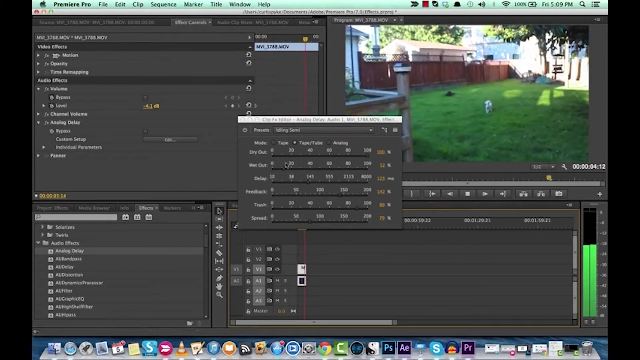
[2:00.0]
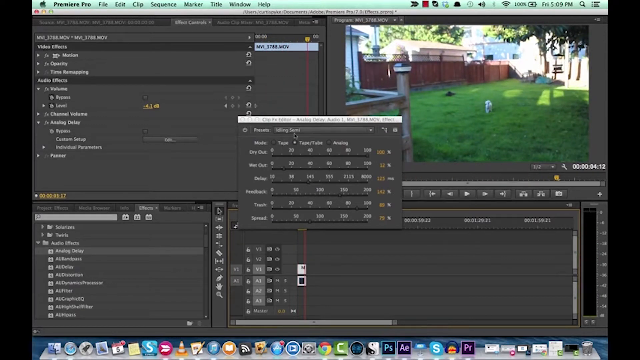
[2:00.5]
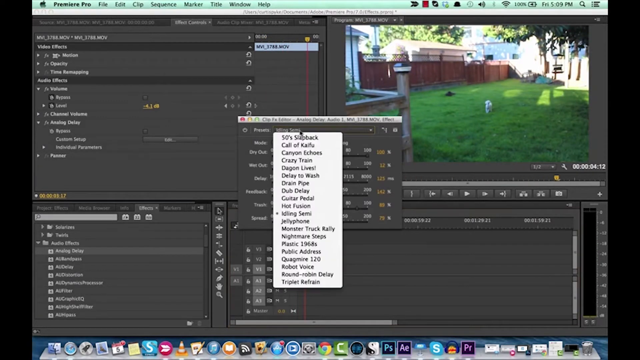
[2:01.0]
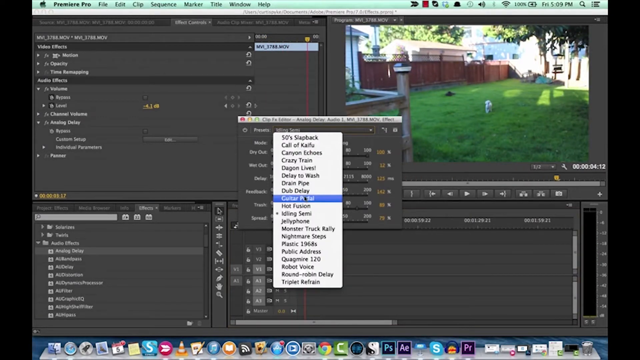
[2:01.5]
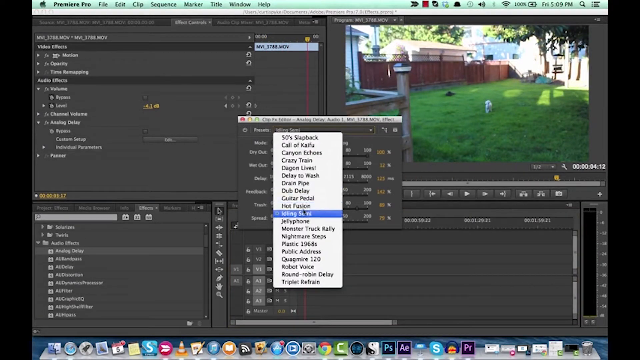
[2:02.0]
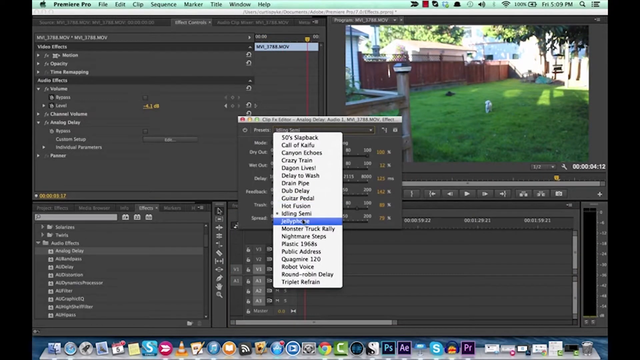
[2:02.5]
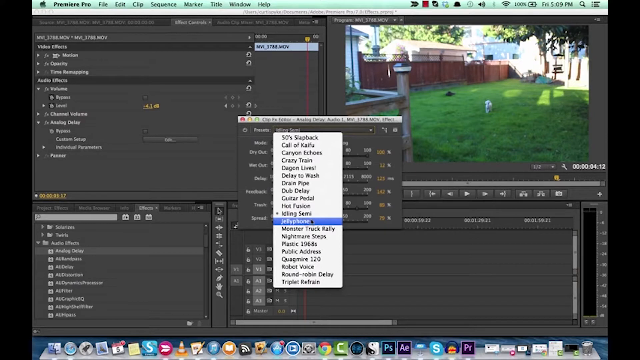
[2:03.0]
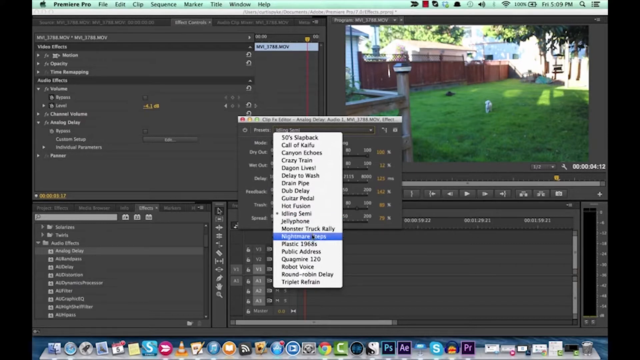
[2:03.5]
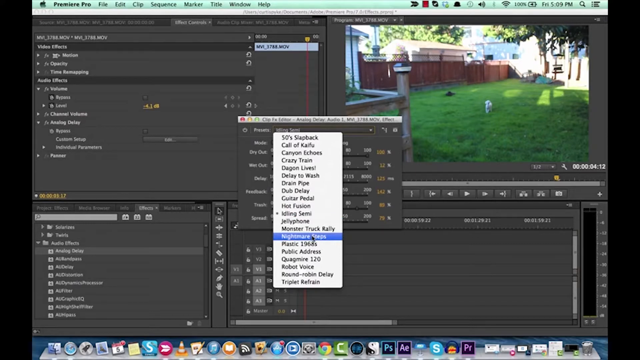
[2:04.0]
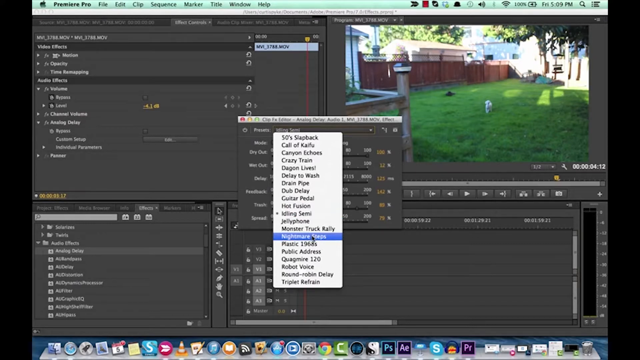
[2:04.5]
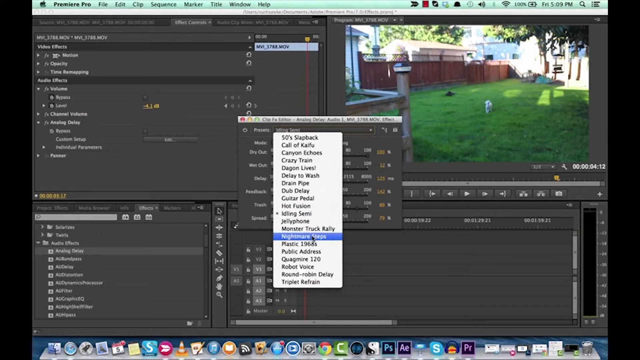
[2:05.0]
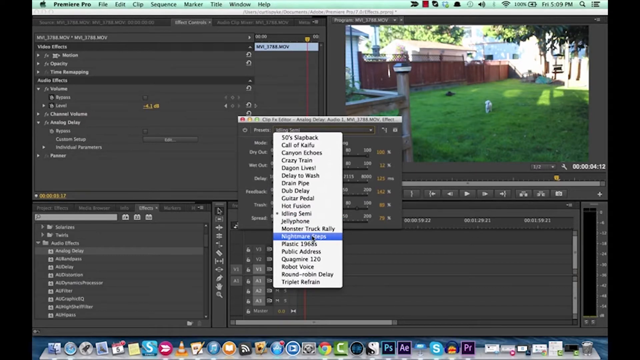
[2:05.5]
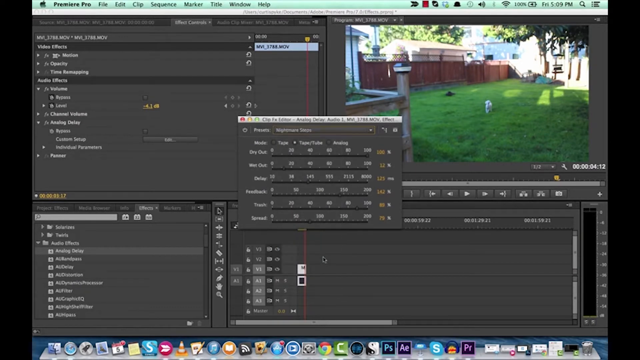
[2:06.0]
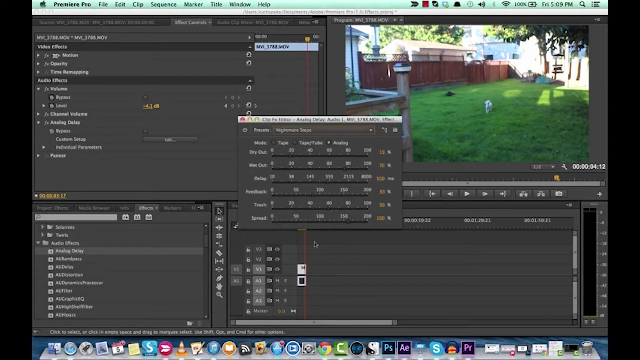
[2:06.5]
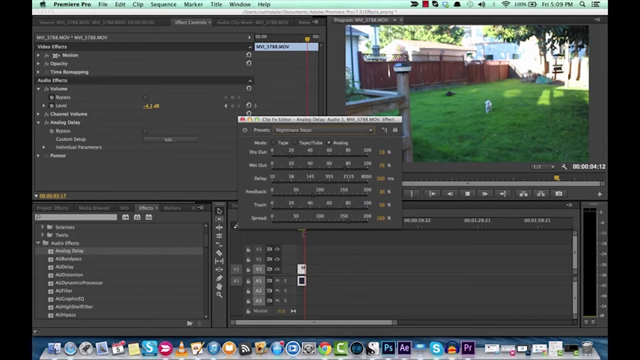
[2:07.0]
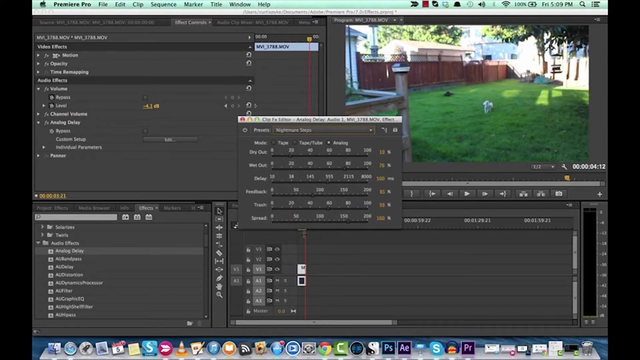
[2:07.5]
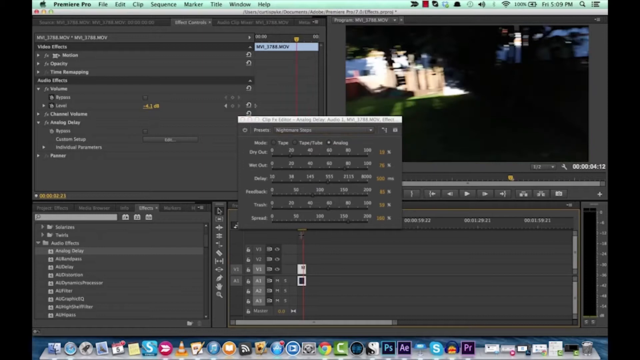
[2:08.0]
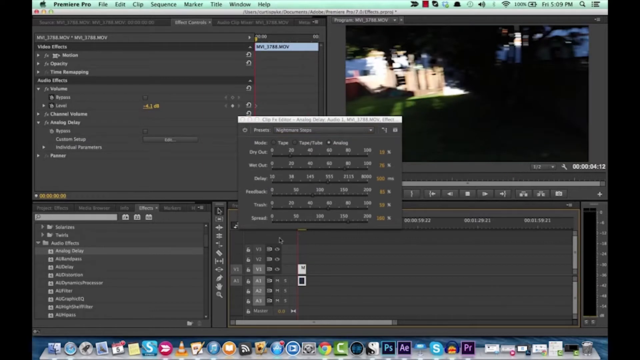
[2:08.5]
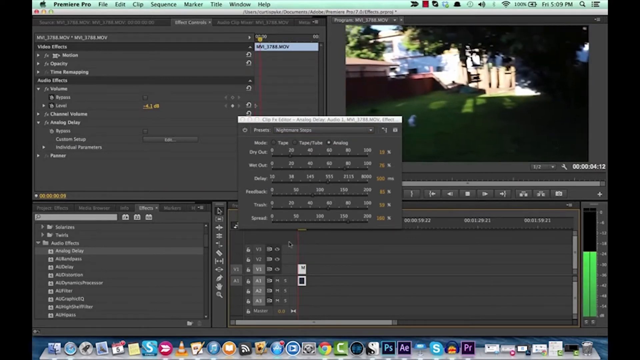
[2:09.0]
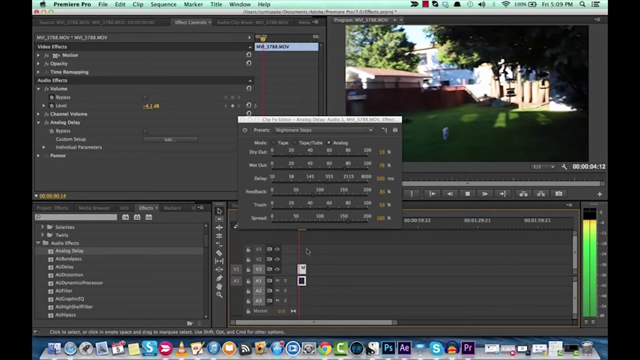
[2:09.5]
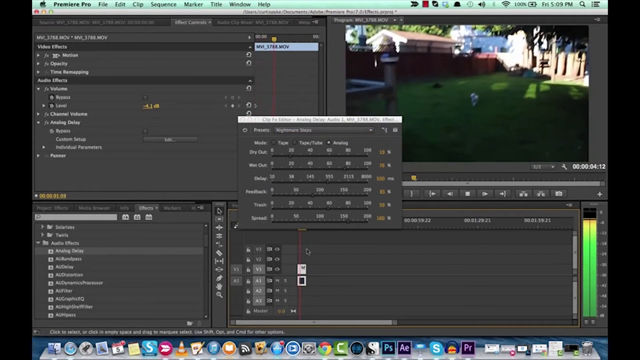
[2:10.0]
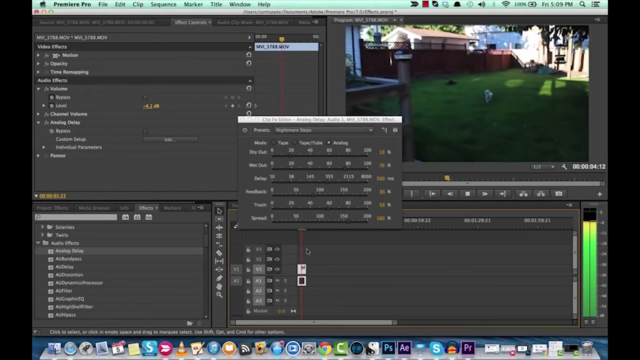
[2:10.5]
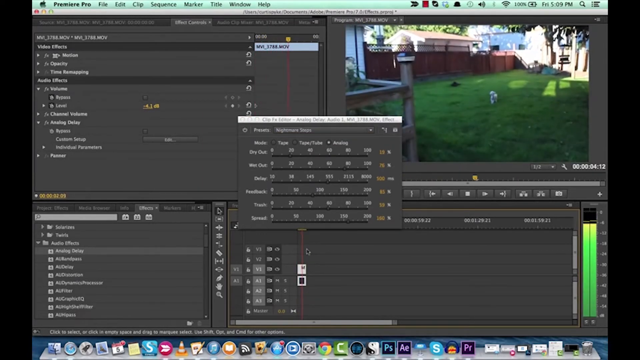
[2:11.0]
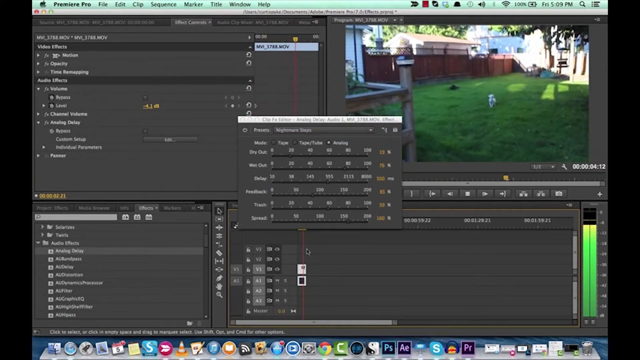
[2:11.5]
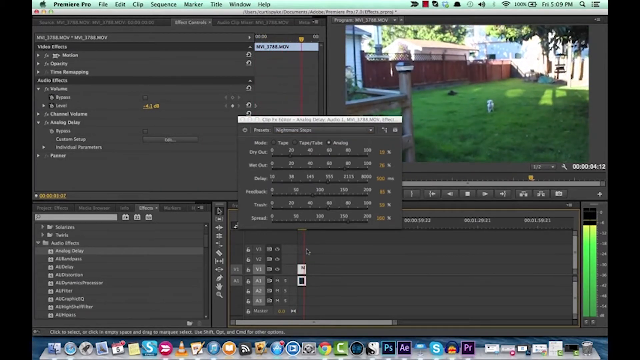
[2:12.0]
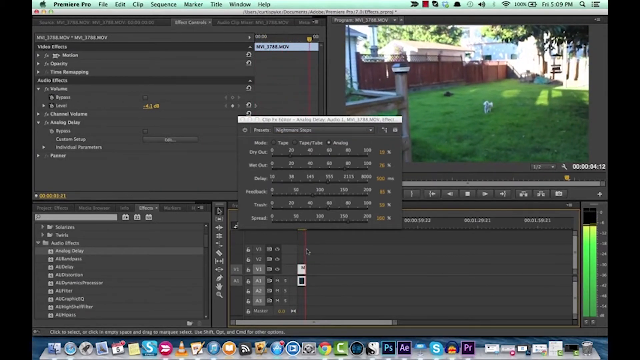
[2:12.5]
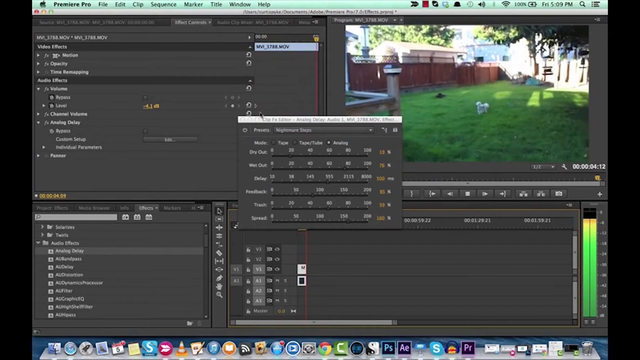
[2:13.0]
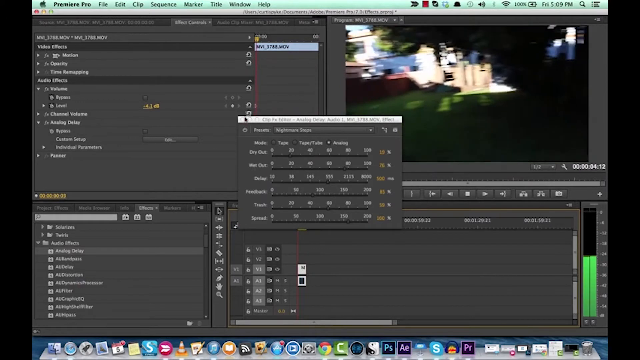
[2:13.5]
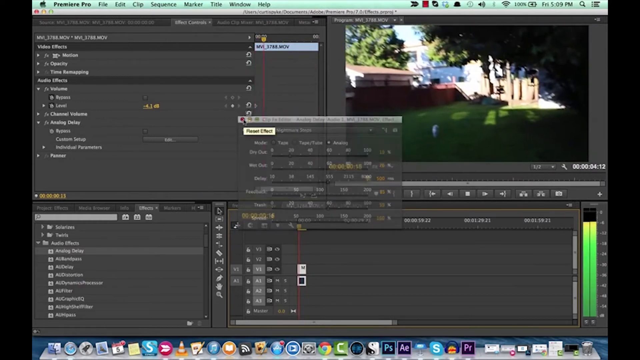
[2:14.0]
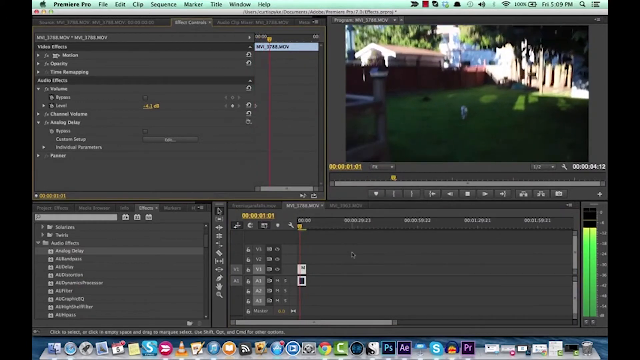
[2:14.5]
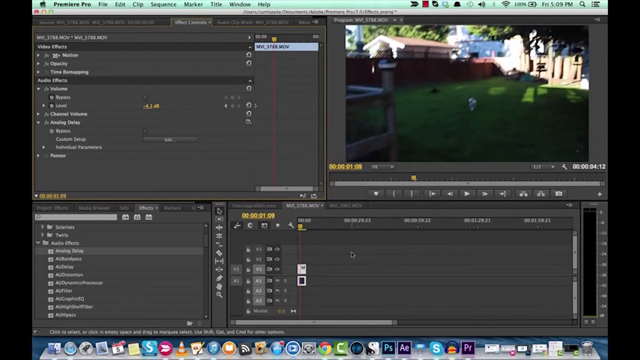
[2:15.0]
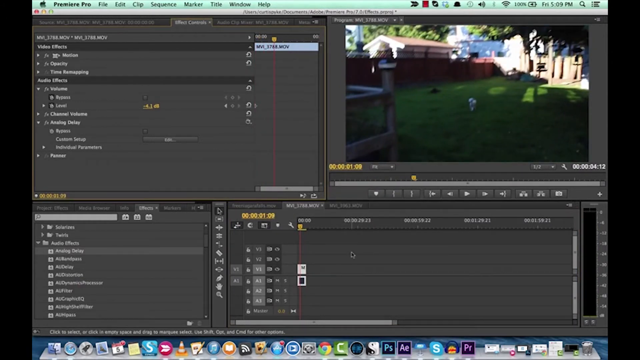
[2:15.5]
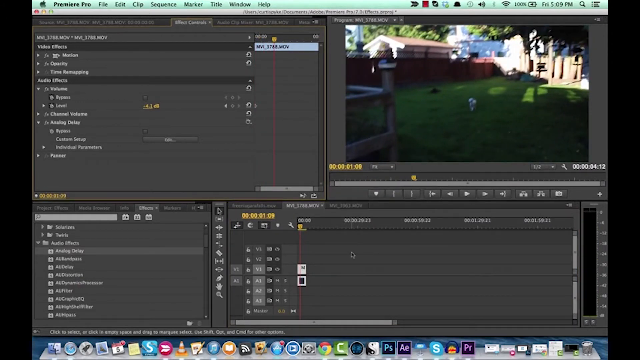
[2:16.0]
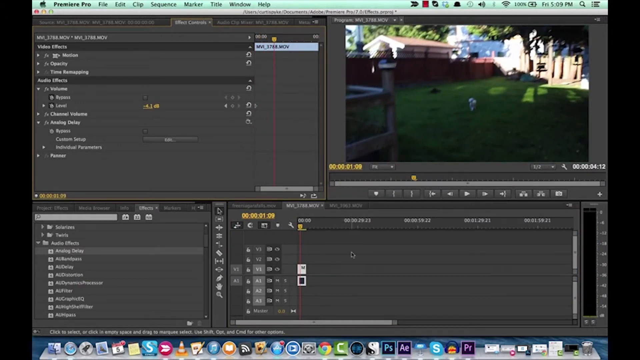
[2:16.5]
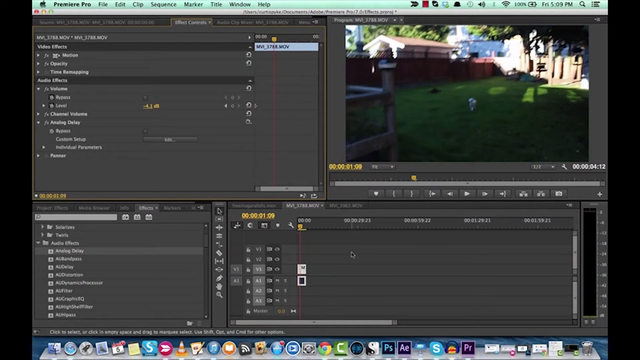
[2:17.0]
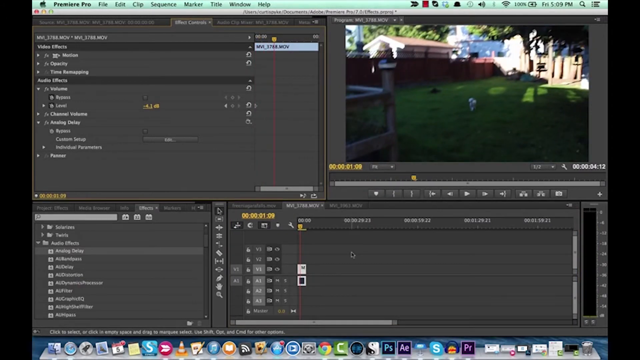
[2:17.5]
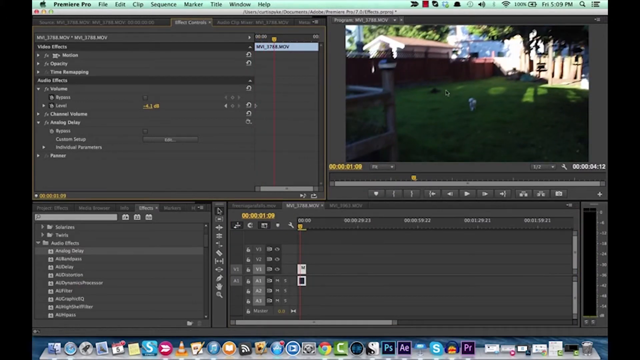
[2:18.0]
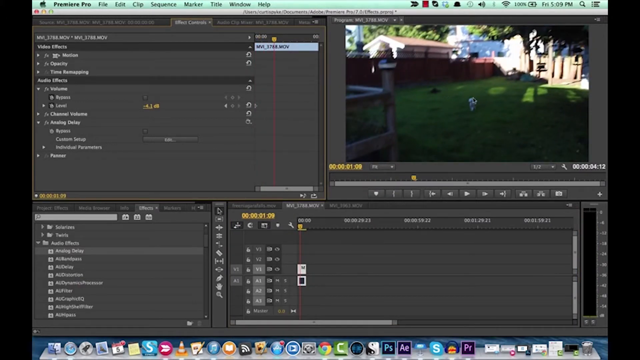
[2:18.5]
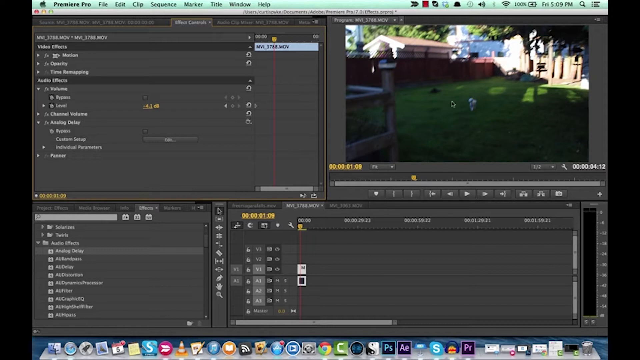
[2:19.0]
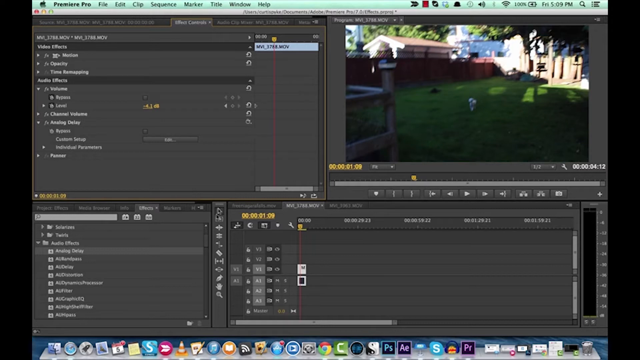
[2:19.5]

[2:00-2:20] The mouse moves to the right-hand side of the screen and back to the center, to the presets in a gray FX viewer box. The user moves from the last preset, whose name is hard to read, further down the list to Nightmare Snaps, and then toward the bottom to what is apparently Nightmare Scraps. They start the preview once and then a second time, go back to the drop-down list, move further down and select the nightmare effect, restart the preview and let it play, and it restarts slightly again. The mouse then moves to the center of the screen, apparently the center left, and the preview ends.